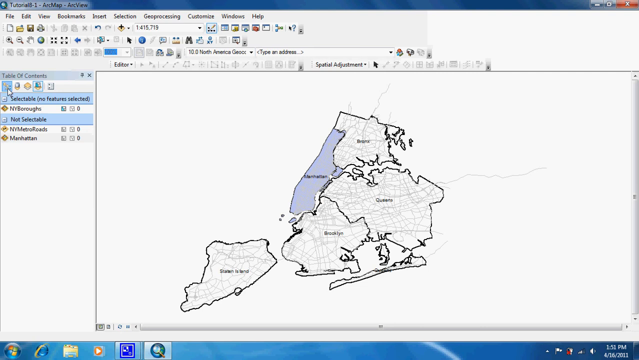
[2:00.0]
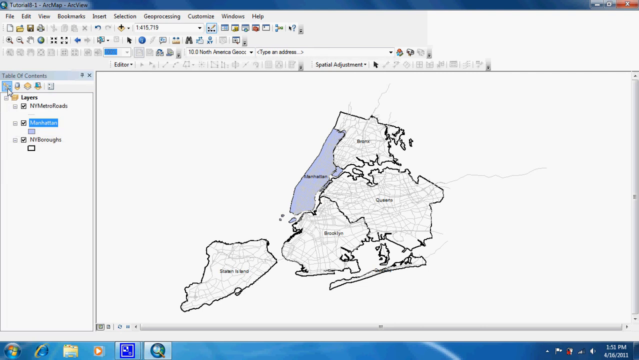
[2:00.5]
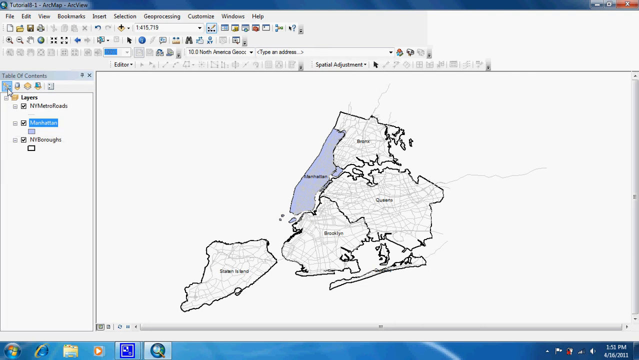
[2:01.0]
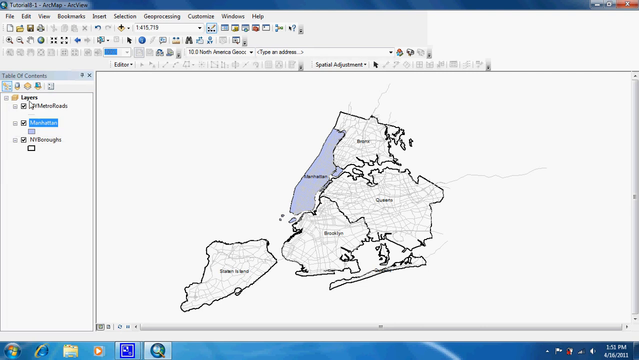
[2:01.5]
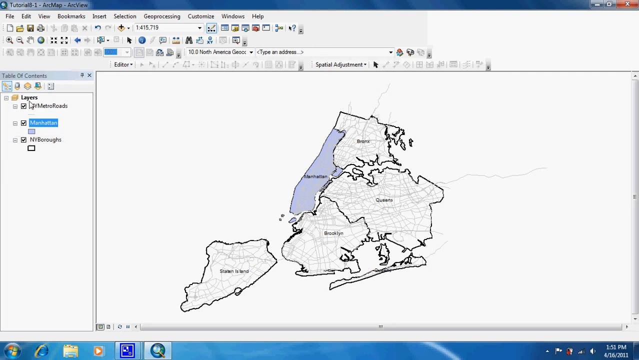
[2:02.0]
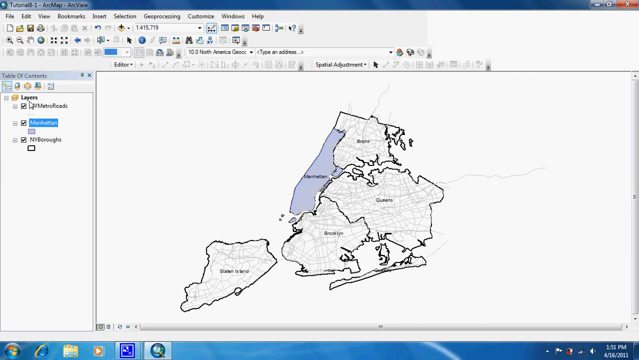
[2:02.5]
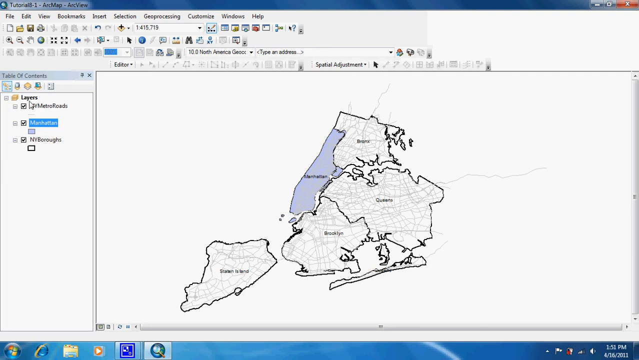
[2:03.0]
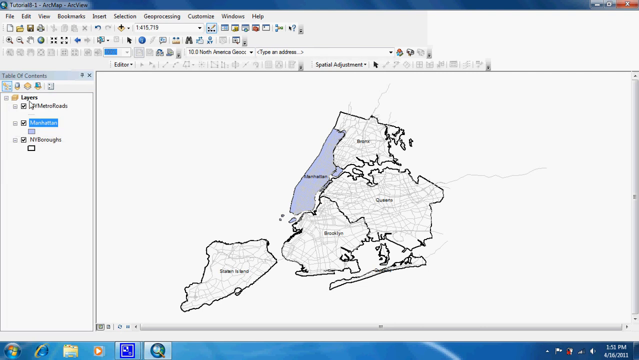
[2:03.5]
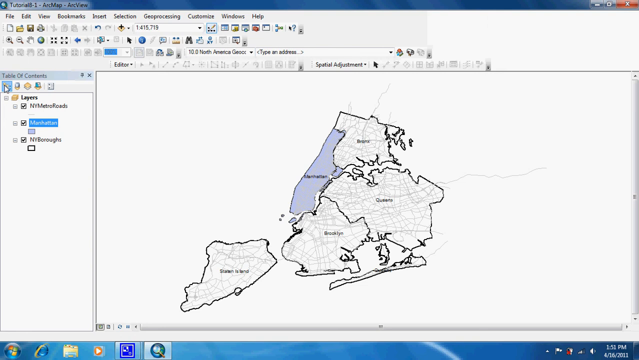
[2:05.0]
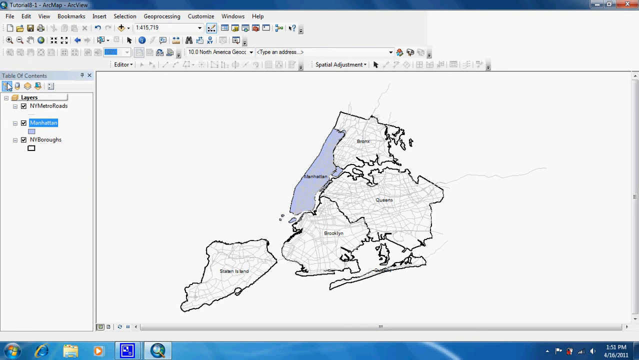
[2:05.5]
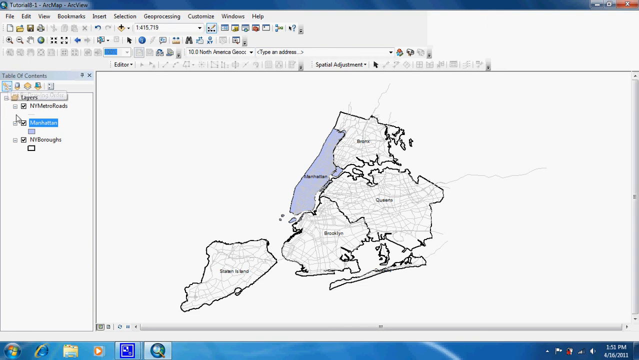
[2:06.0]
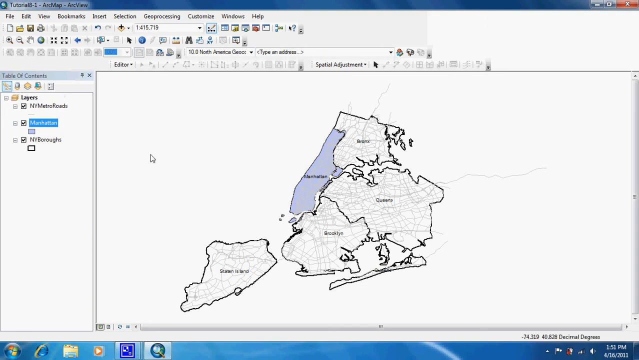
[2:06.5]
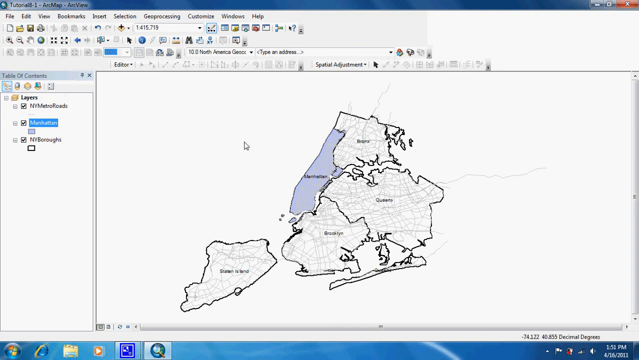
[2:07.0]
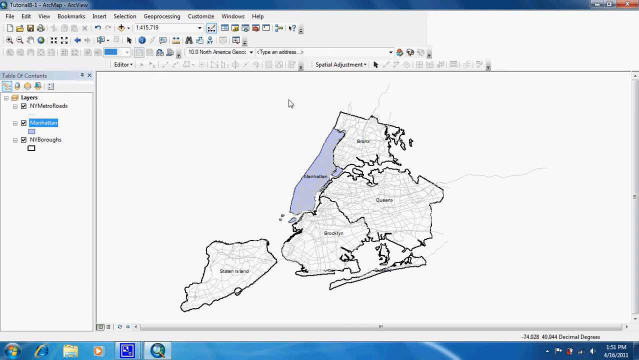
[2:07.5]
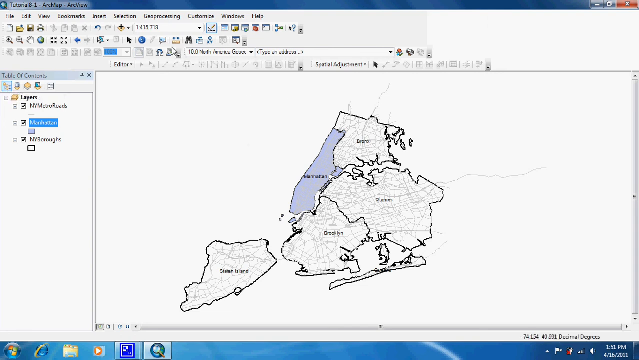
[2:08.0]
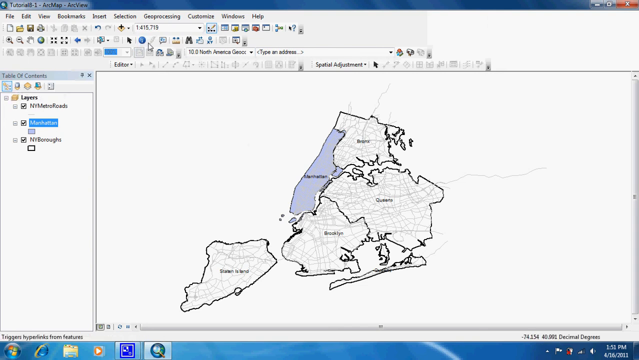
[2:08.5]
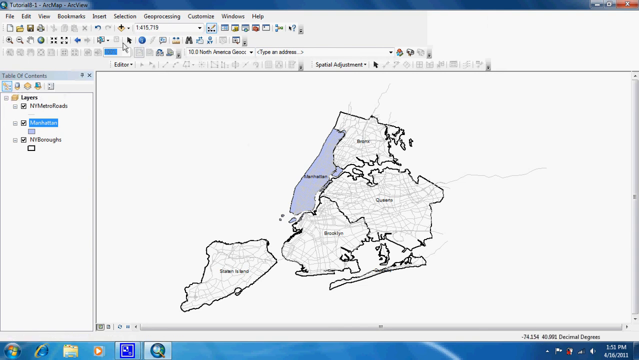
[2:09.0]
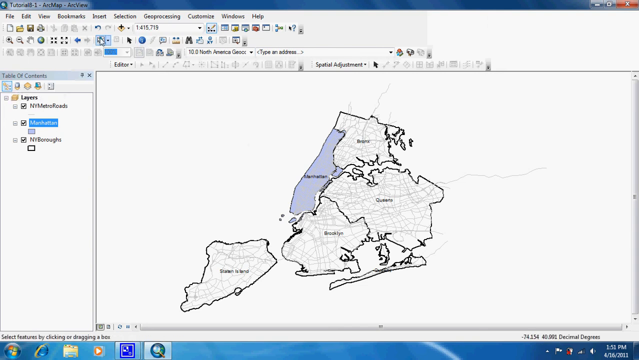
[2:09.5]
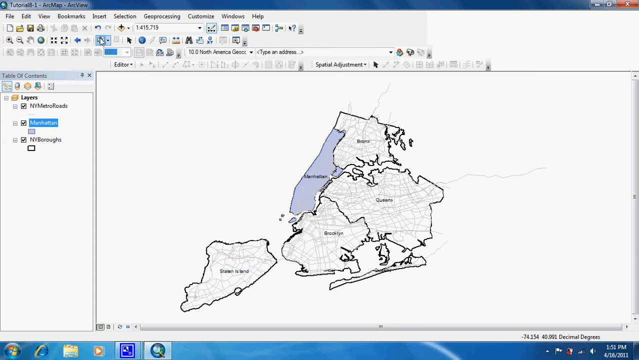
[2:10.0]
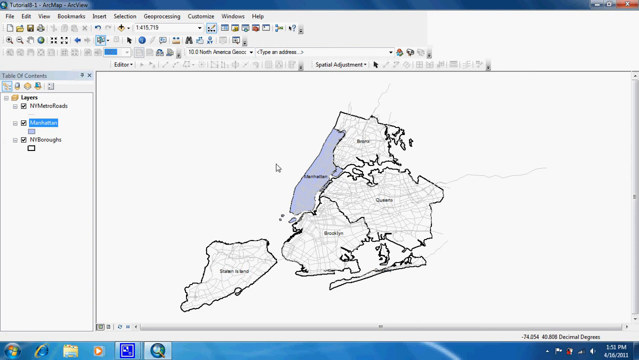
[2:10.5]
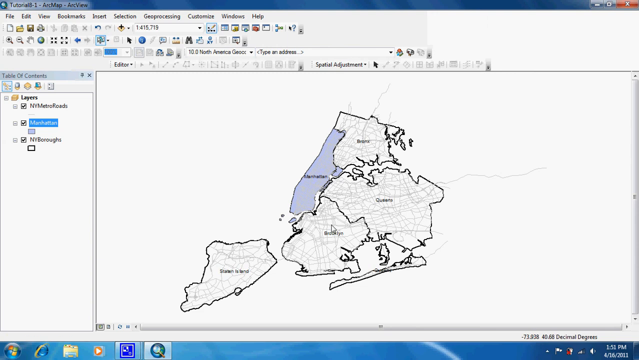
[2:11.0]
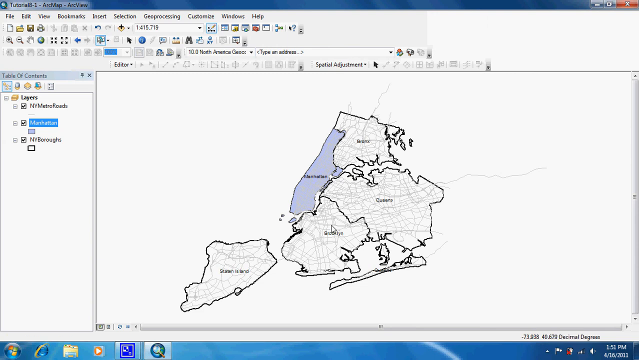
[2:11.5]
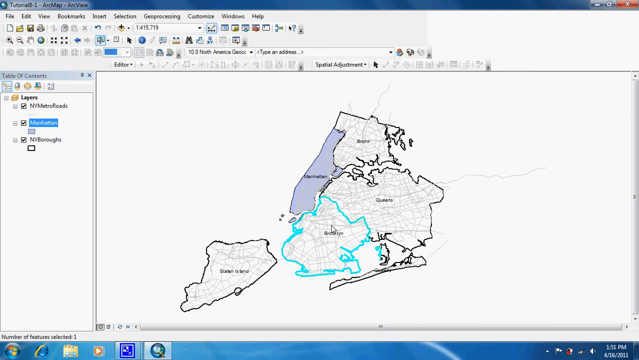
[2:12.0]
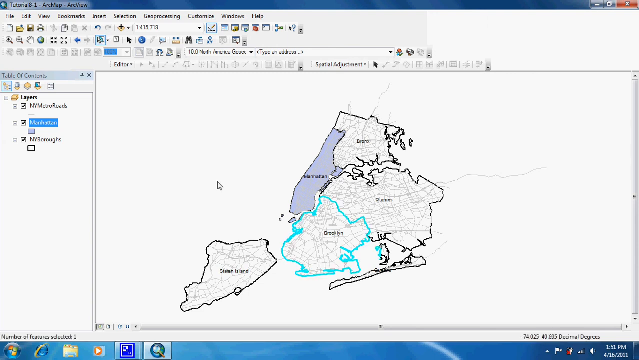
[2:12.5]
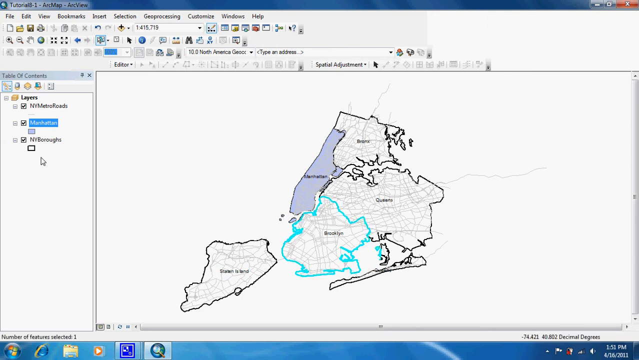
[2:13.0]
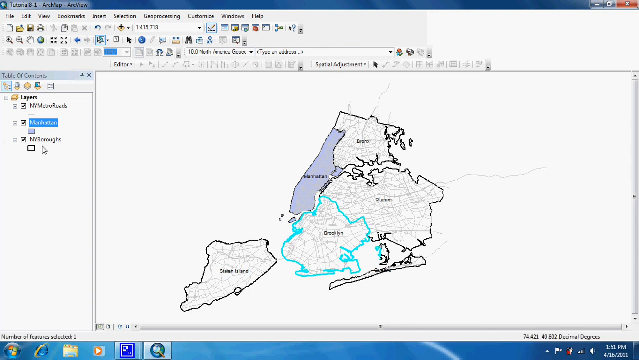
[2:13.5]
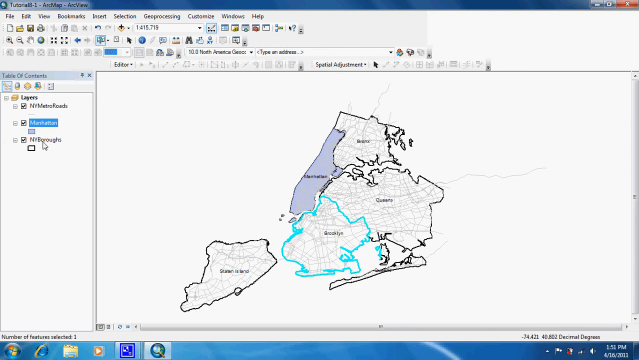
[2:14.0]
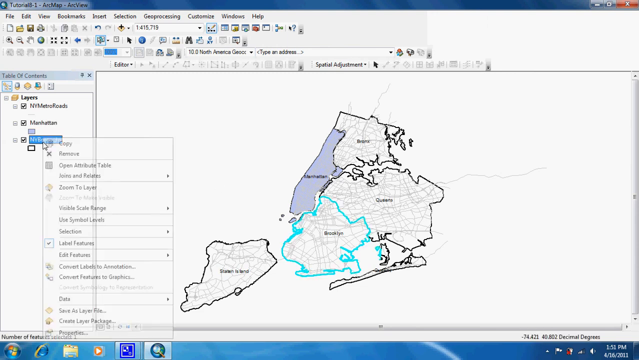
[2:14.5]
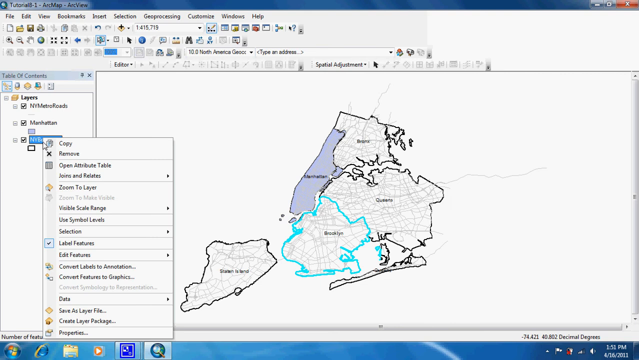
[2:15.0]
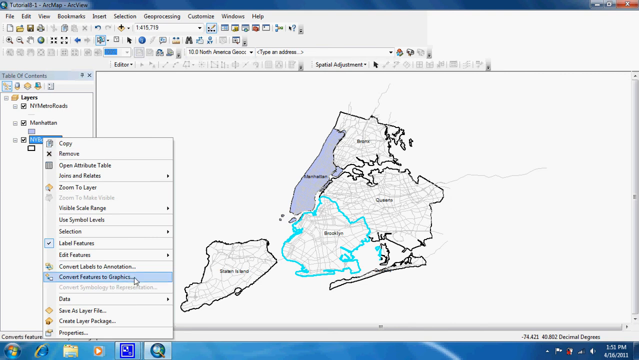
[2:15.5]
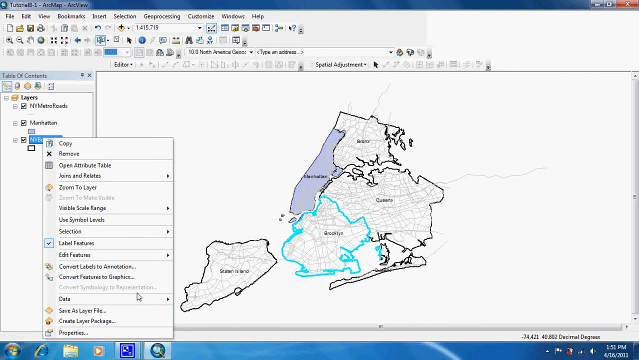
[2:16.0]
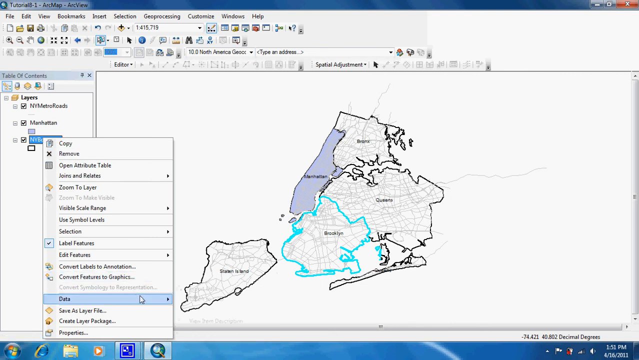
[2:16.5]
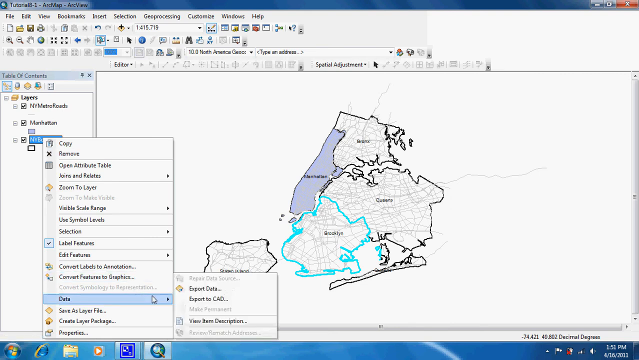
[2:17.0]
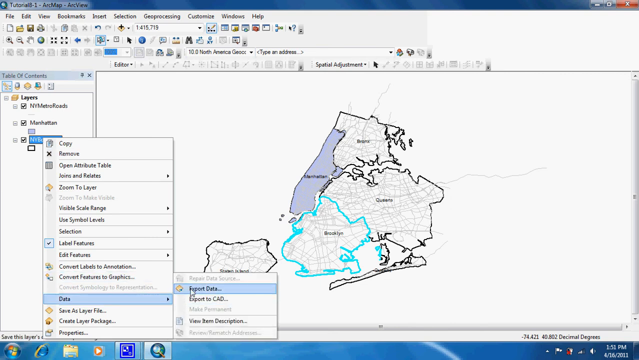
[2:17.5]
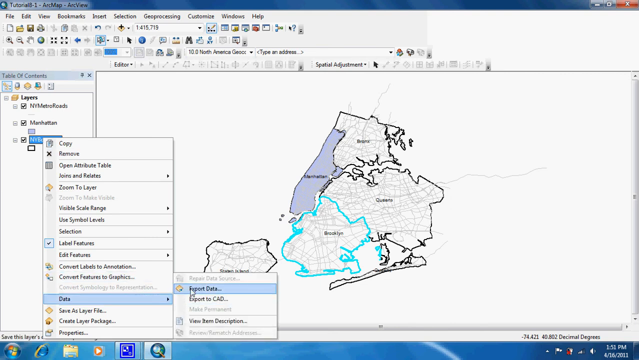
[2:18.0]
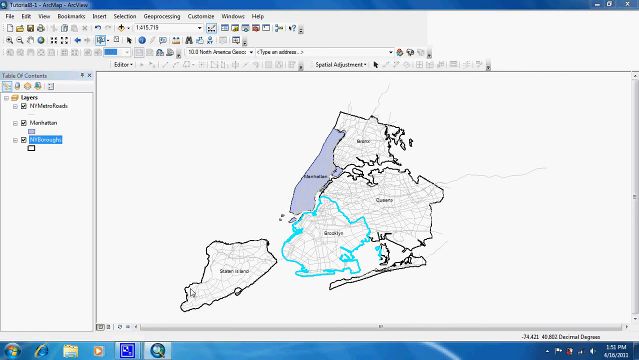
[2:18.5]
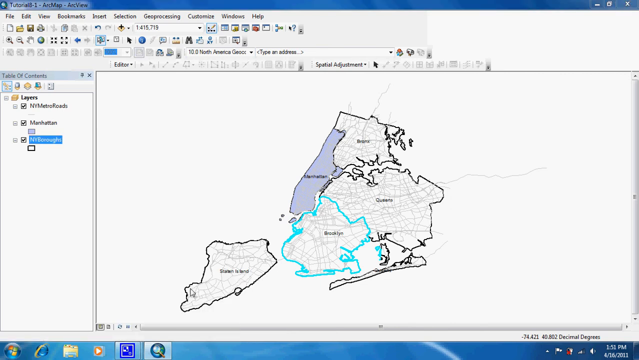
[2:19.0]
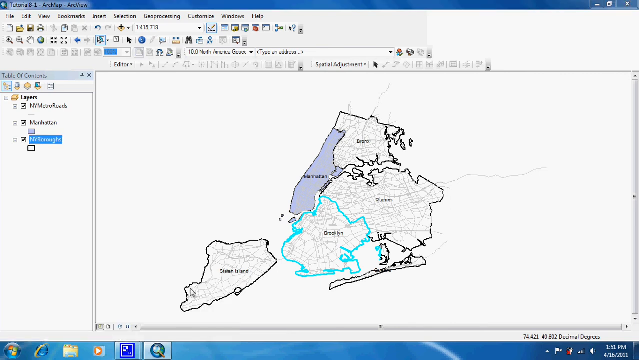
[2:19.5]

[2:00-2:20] The mouse pointer hovers over the left pane under the Table of Contents section, clicks one of the icons, and moves up to the toolbar area, where a drop-down apparently gets selected. Another icon is clicked, and the Brooklyn borough is now highlighted in teal, while Manhattan is no longer highlighted and is just shaded in purple. On the left-hand pane, New York Boroughs is clicked and export data is chosen again; a window flashes briefly and disappears immediately. Manhattan remains shaded purple, and the outside of Brooklyn is highlighted in teal, much as Manhattan was earlier.